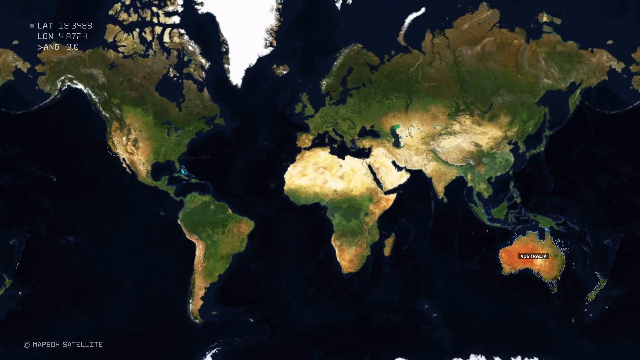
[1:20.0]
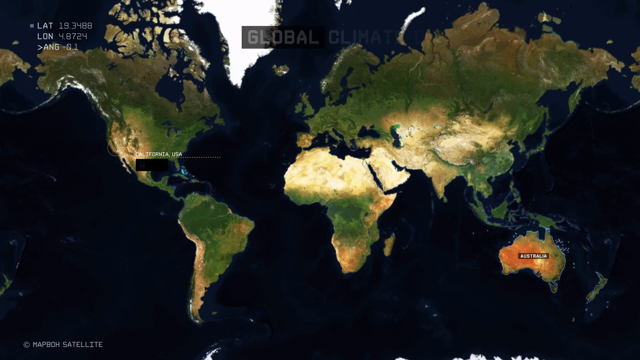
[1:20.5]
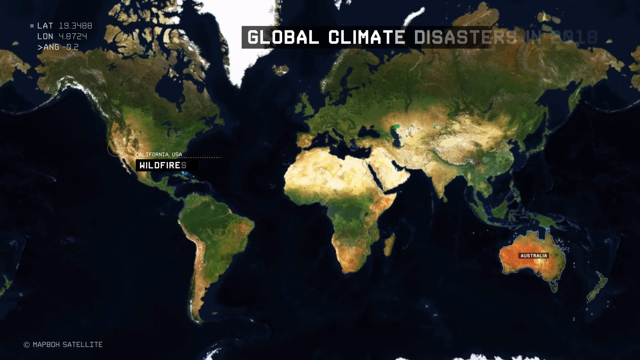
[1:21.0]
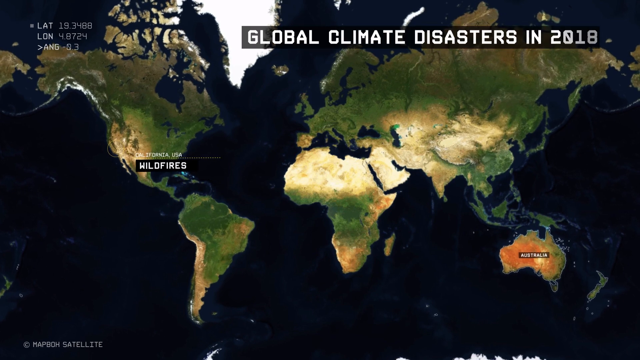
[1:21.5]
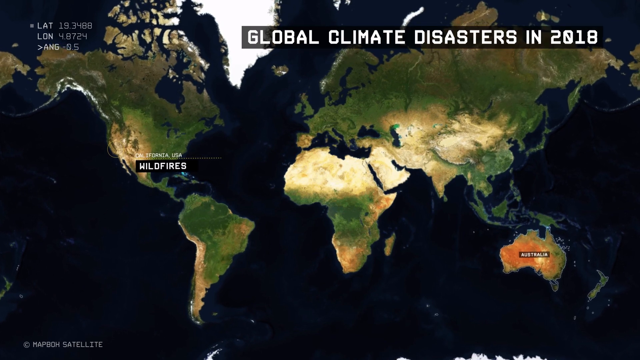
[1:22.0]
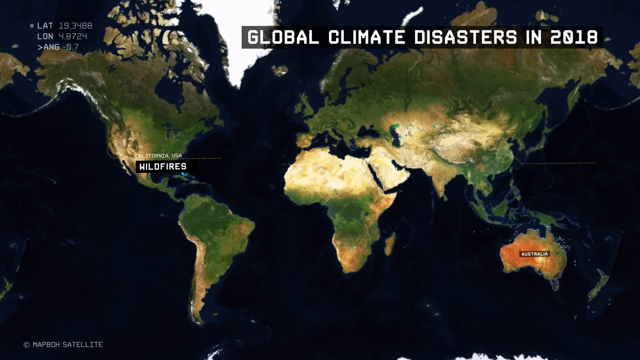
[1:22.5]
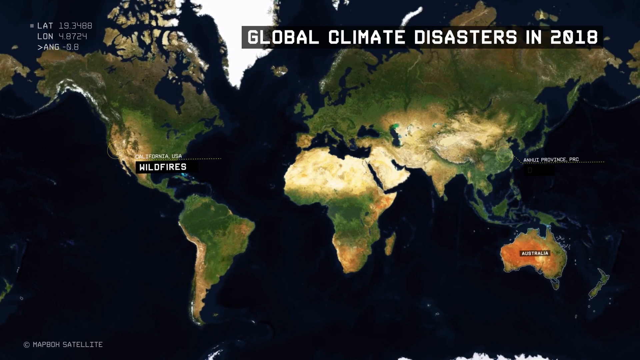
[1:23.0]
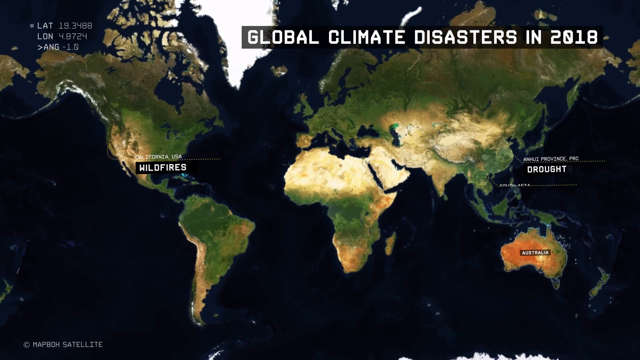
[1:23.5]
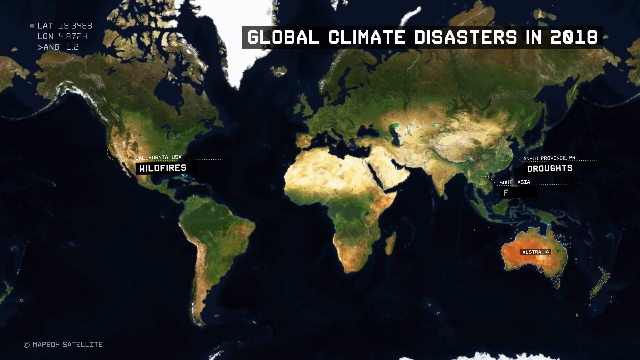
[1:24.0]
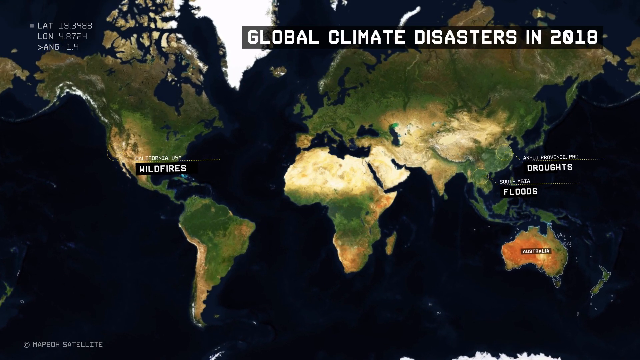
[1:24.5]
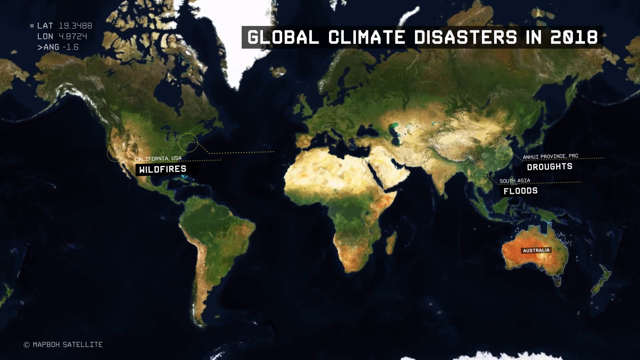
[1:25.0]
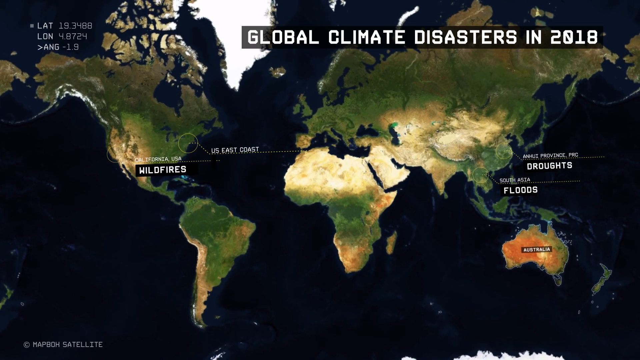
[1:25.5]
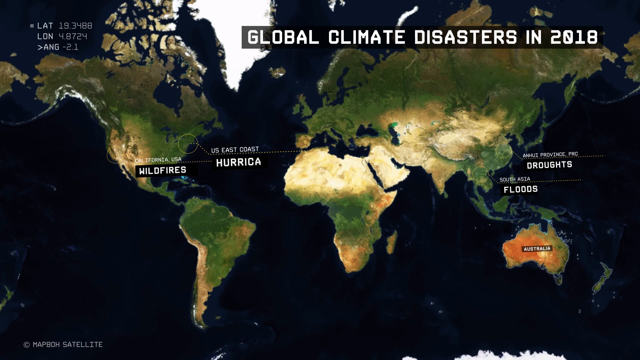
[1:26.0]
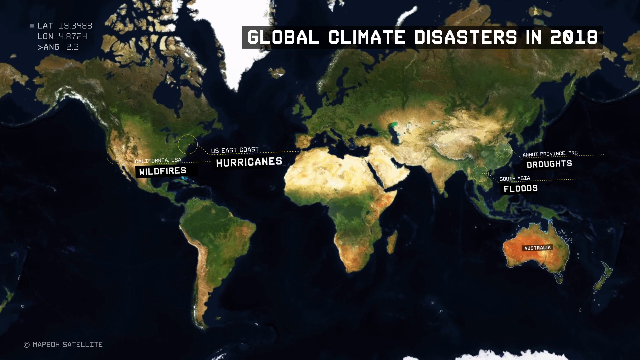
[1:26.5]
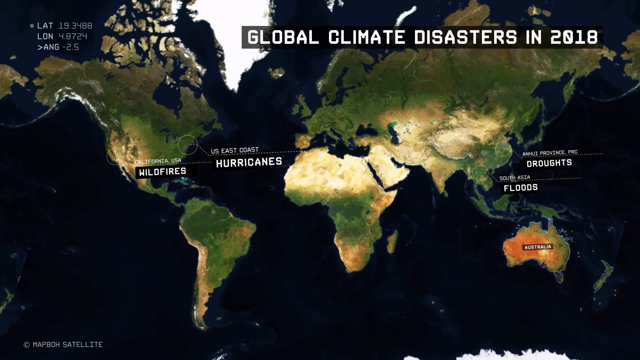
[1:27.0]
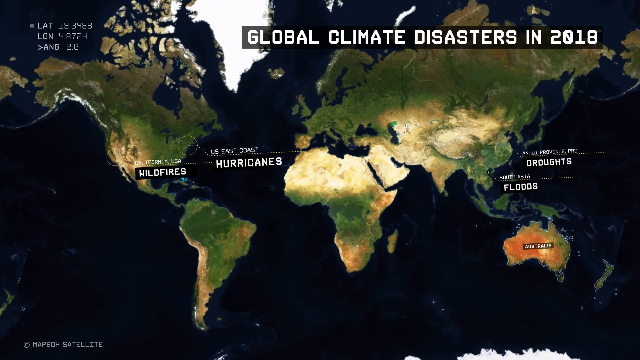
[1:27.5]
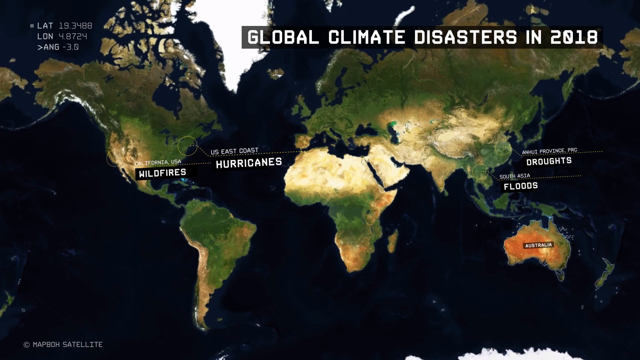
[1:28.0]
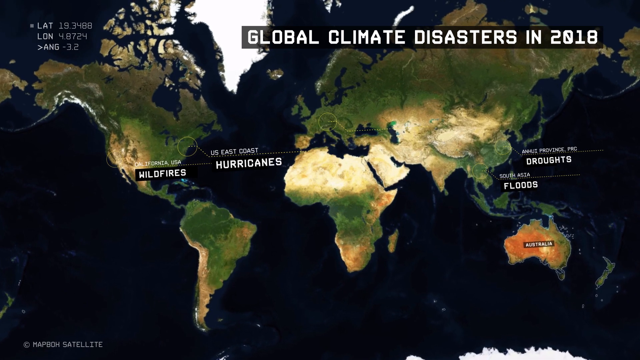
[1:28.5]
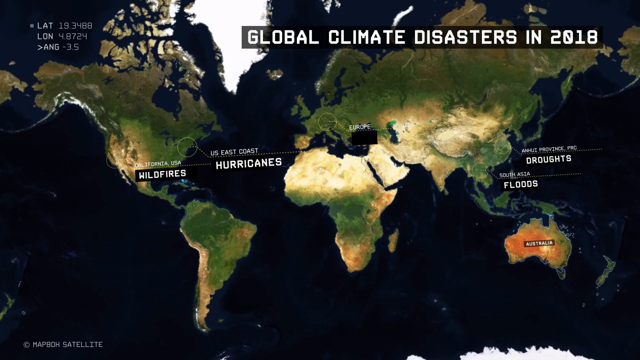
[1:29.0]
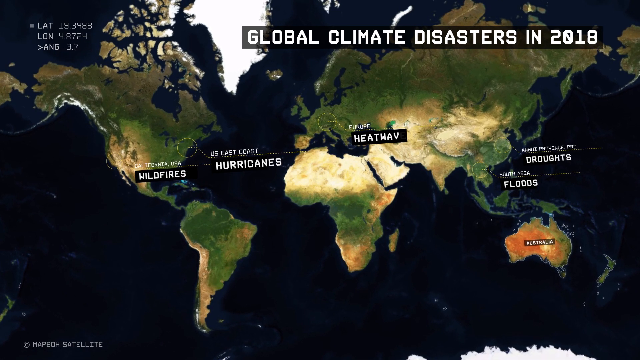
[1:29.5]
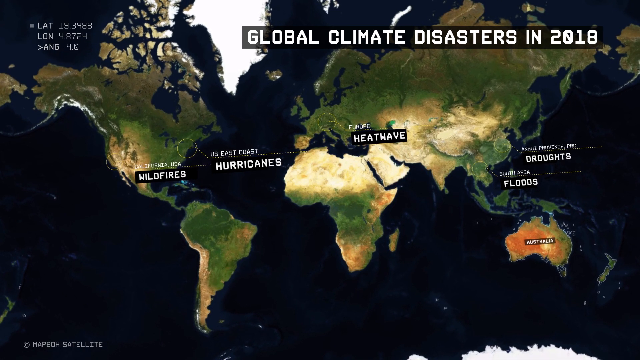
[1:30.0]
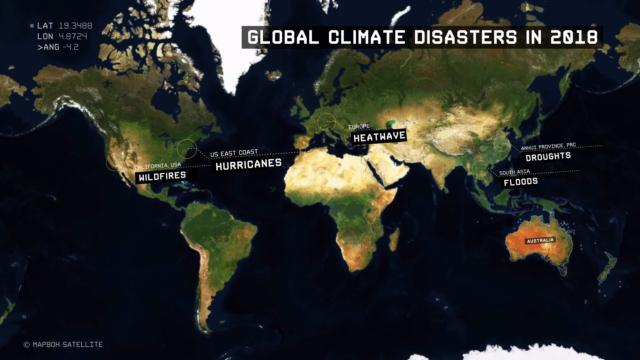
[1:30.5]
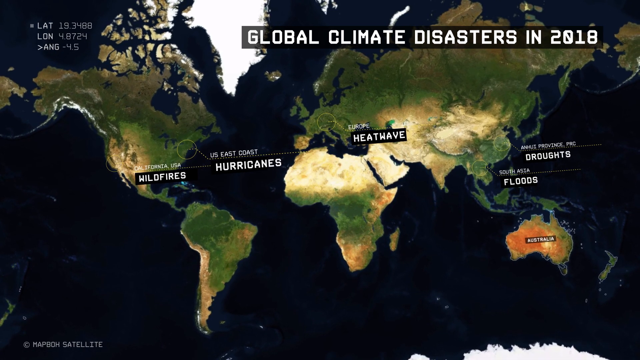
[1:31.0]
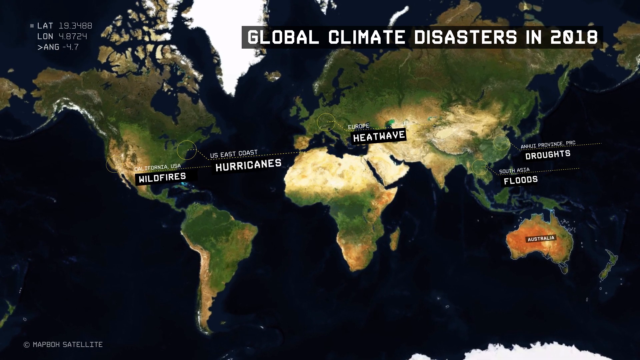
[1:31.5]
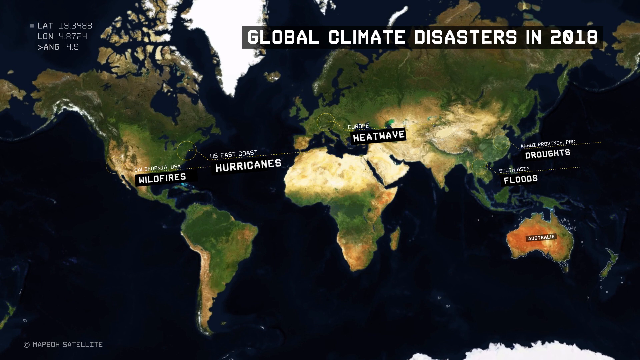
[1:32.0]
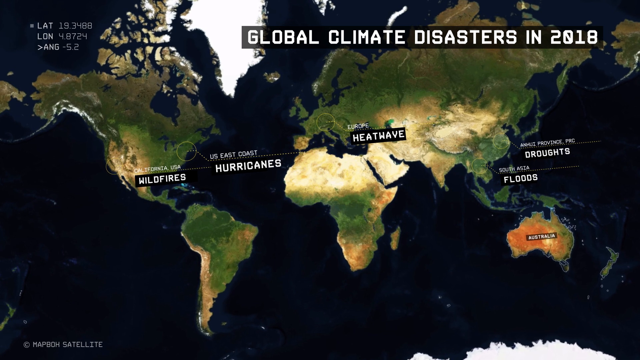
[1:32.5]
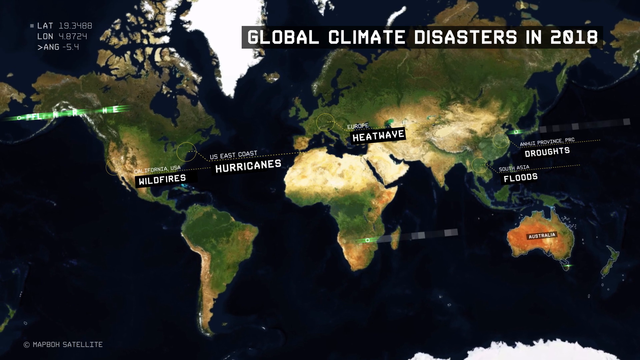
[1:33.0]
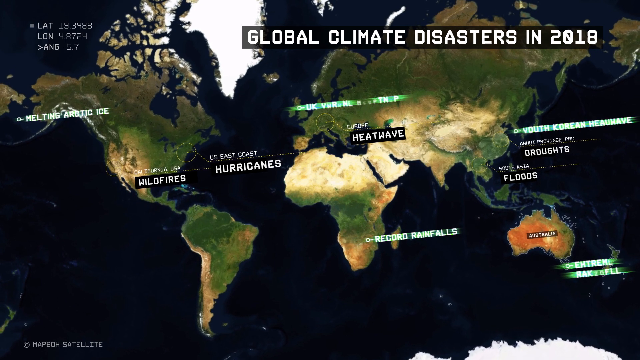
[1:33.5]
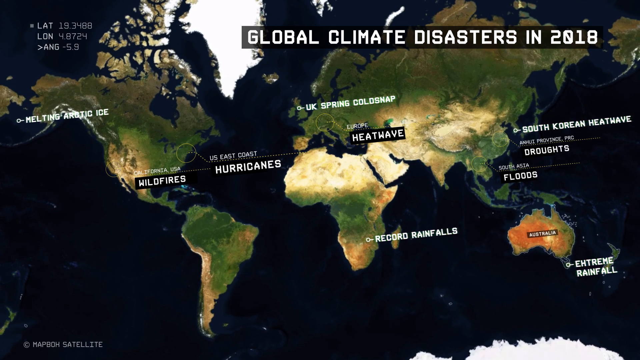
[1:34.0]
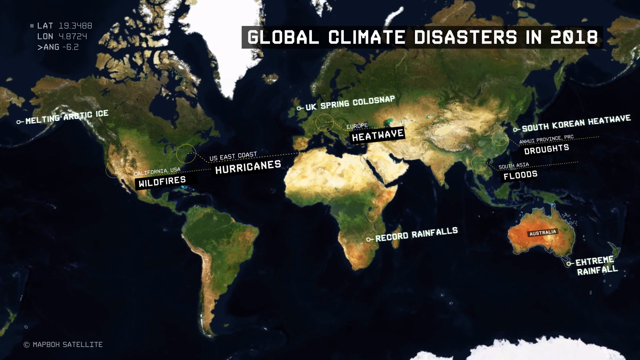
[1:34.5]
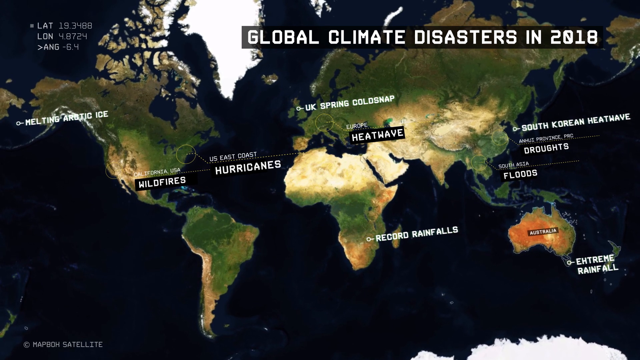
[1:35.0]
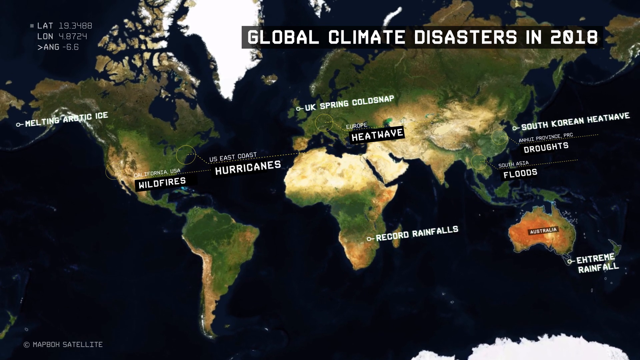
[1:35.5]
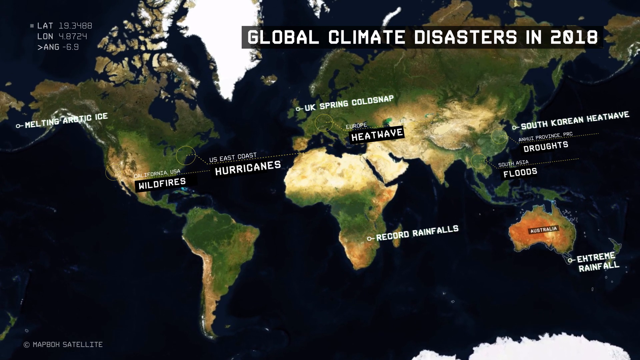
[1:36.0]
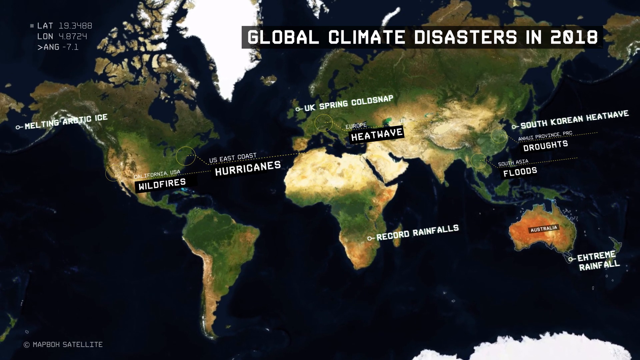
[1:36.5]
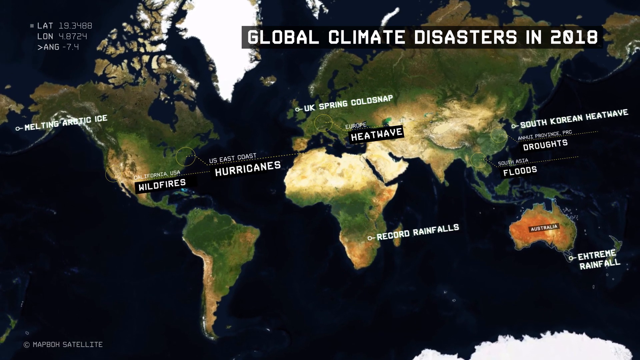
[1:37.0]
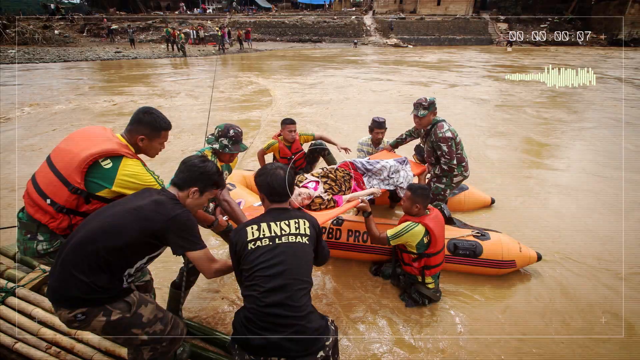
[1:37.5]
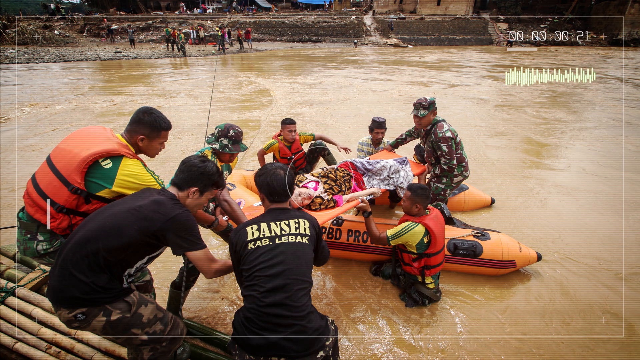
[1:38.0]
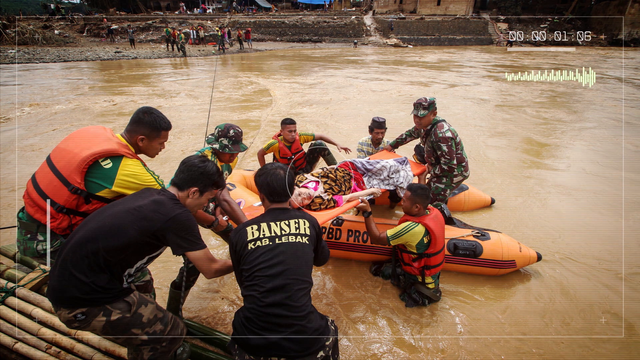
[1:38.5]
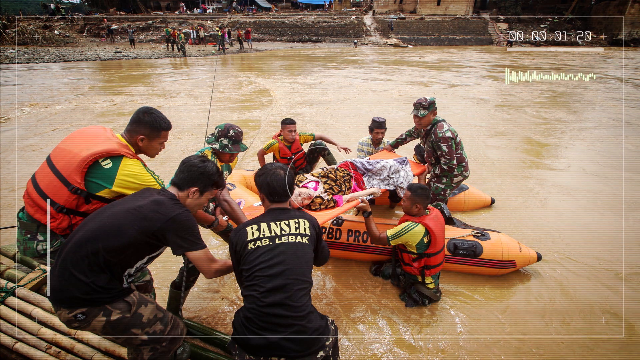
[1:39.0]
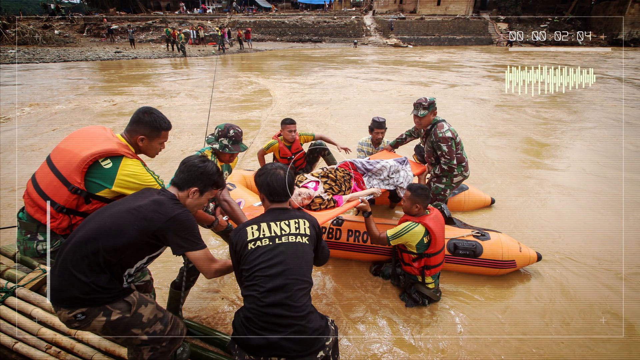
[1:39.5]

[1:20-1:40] A map of global climate disasters in 2018 highlights wildfires, droughts, hurricanes, floods, heatwaves and extreme rainfall in different areas: wildfires in the USA, hurricanes on the US east coast, heatwaves in Europe, record rainfall in the bottom of Africa, a spring cold snap in the UK, droughts in South Korea, floods in South Asia, and extreme rainfall in the south of Russia. Footage then shows people standing by the edge of a river where it seems someone has drowned. The deceased appears to be a female, surrounded by a group of males, including a military man and maybe lifeguards, who are helping carry the body out of the sea.